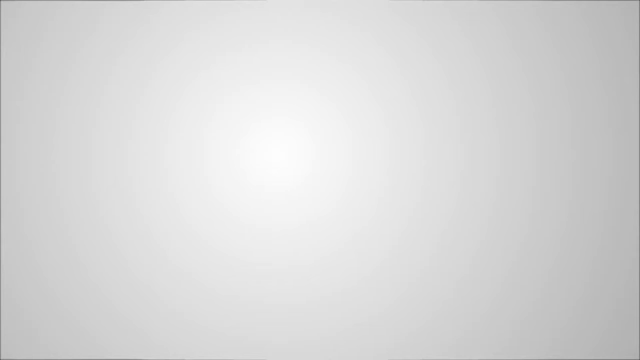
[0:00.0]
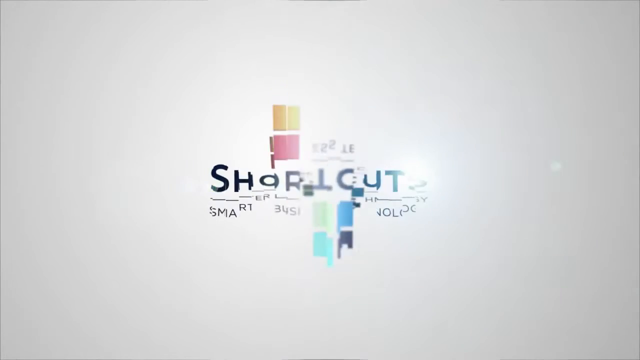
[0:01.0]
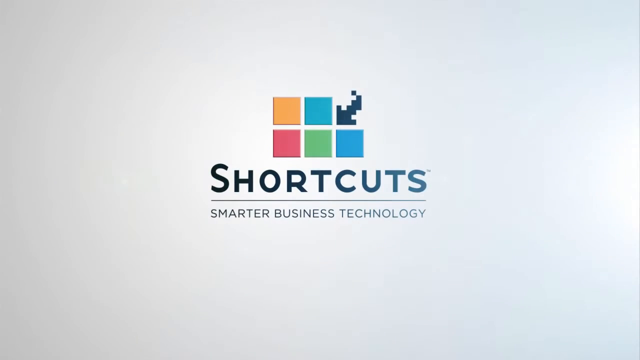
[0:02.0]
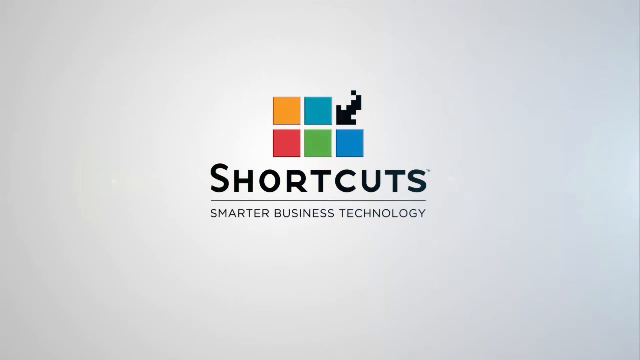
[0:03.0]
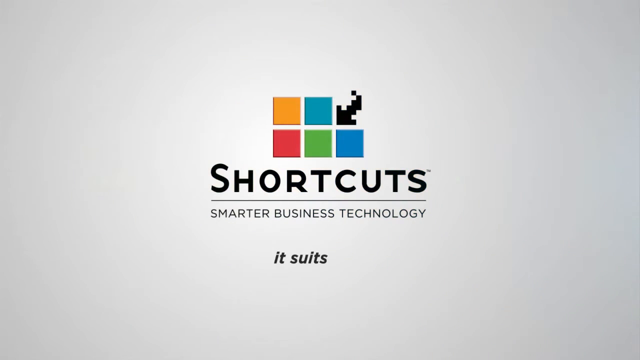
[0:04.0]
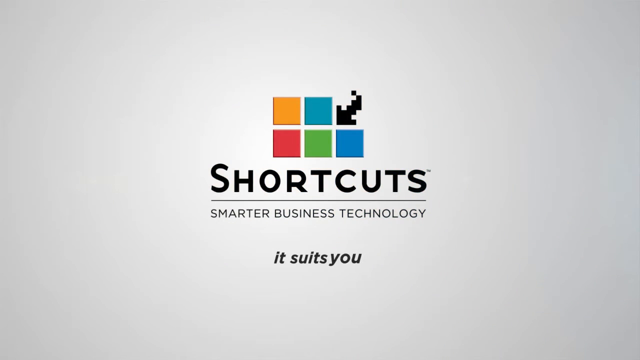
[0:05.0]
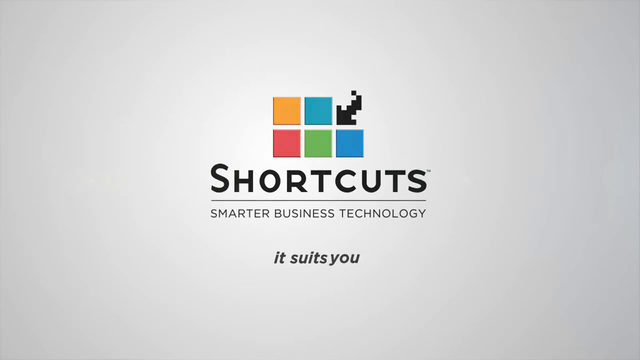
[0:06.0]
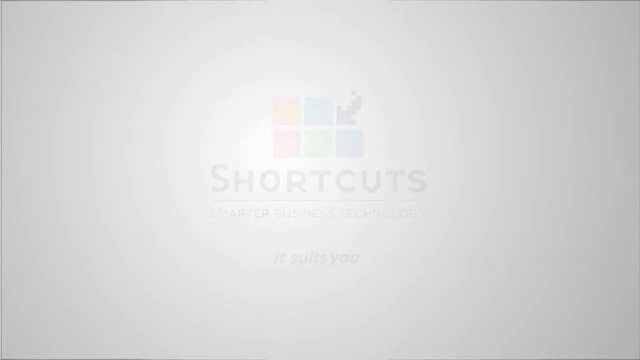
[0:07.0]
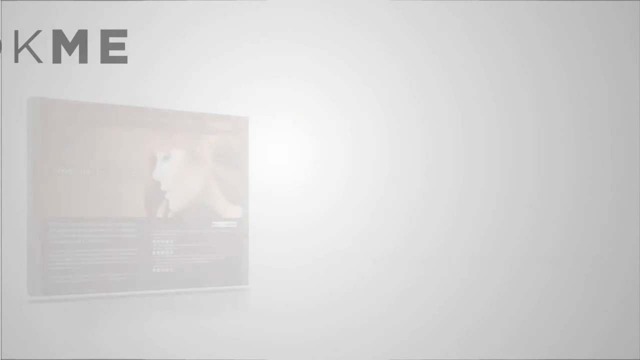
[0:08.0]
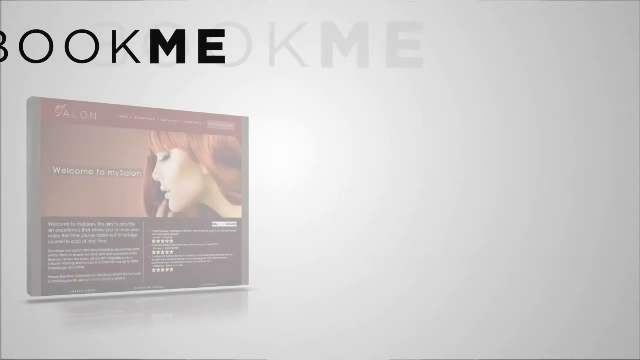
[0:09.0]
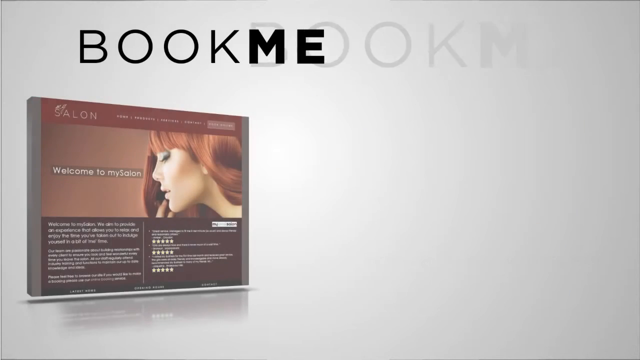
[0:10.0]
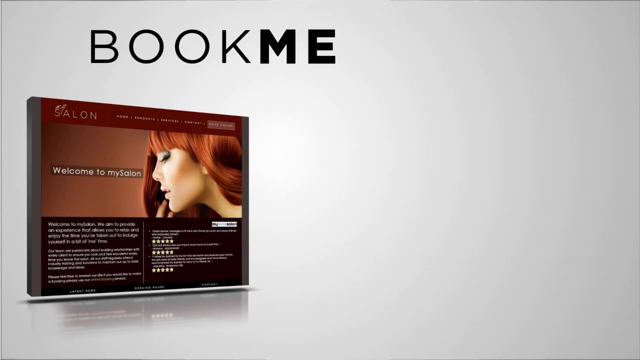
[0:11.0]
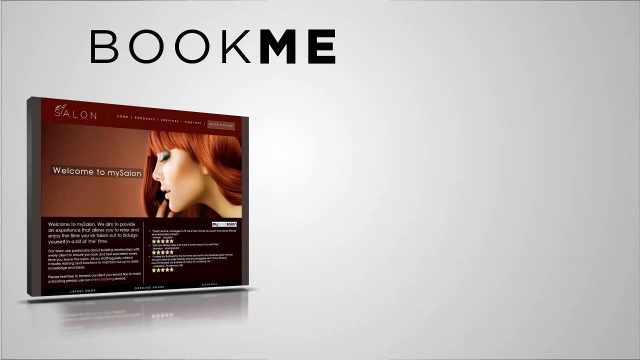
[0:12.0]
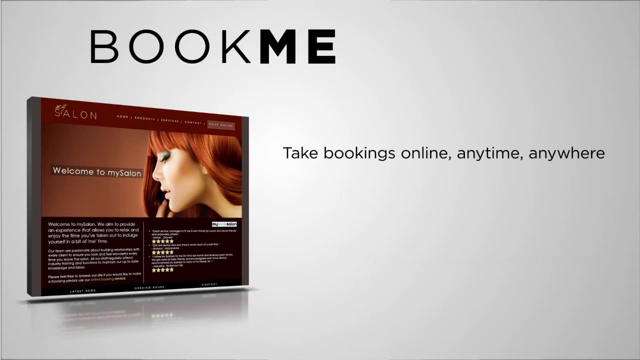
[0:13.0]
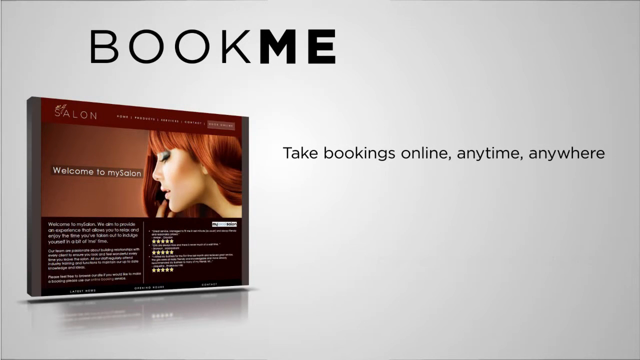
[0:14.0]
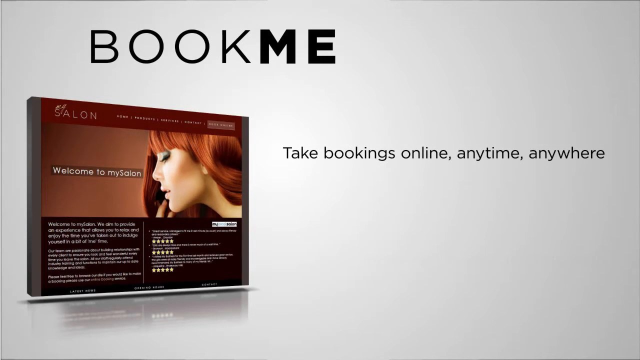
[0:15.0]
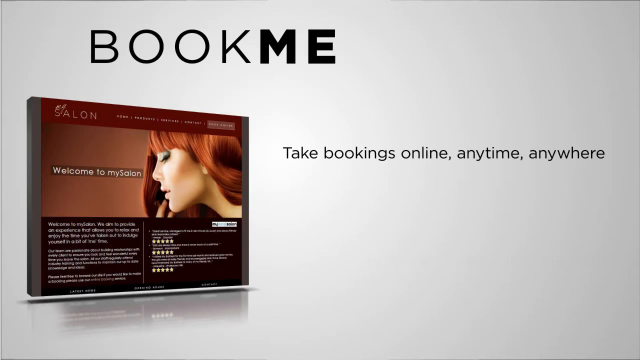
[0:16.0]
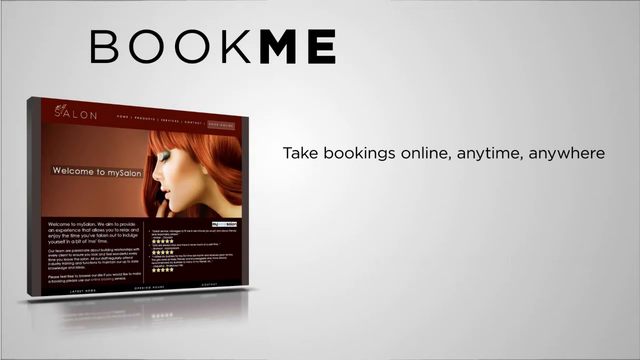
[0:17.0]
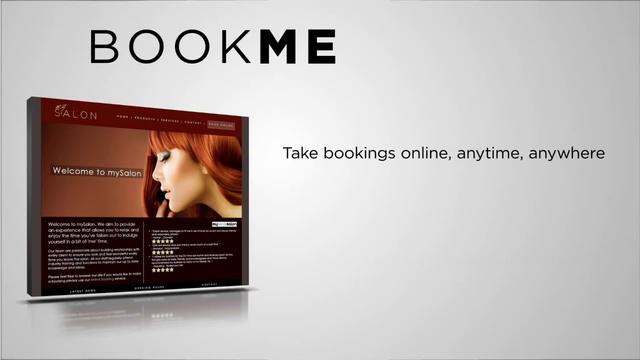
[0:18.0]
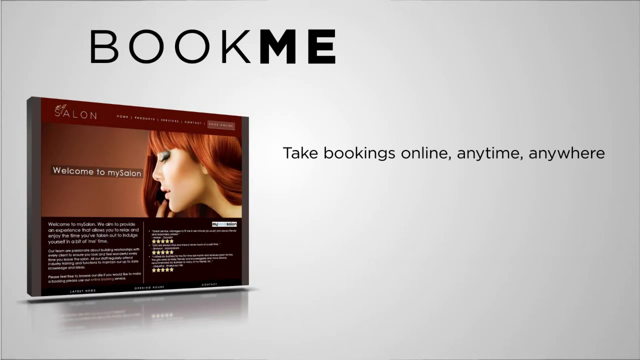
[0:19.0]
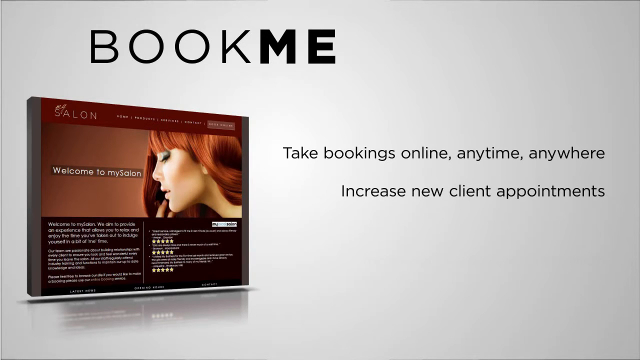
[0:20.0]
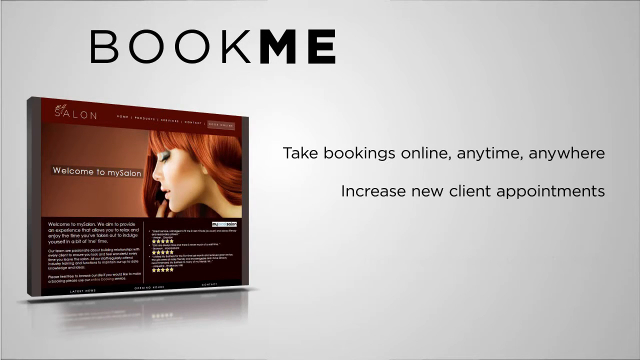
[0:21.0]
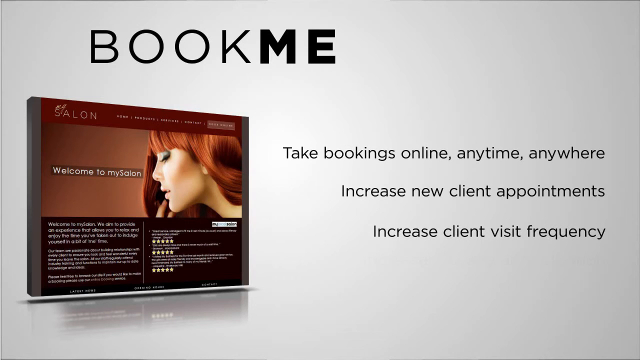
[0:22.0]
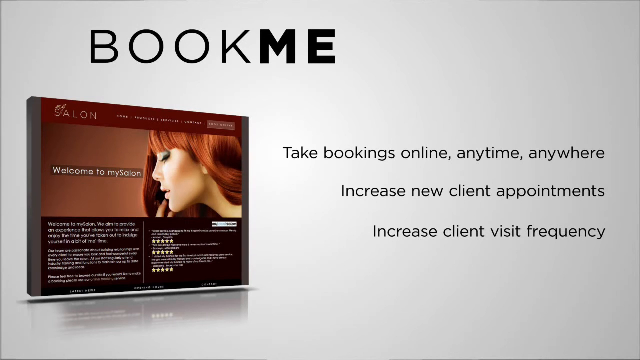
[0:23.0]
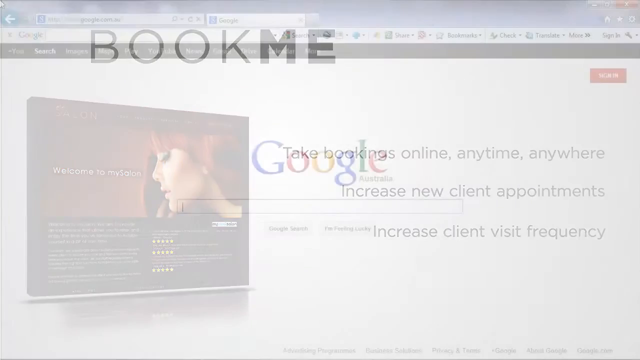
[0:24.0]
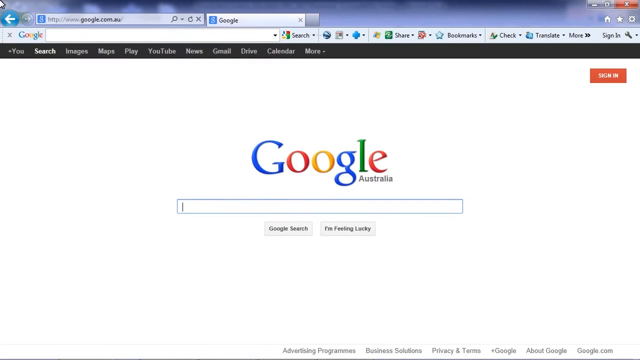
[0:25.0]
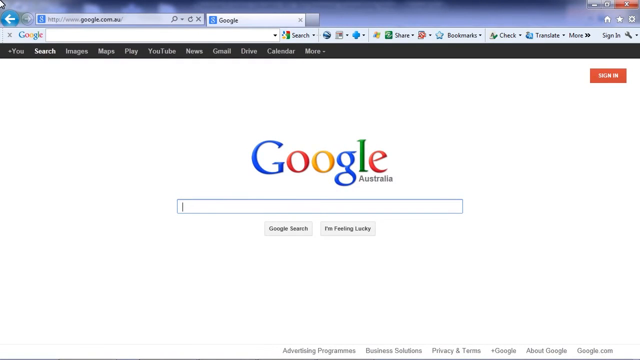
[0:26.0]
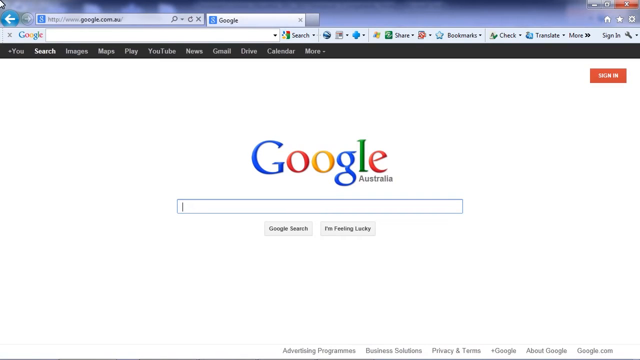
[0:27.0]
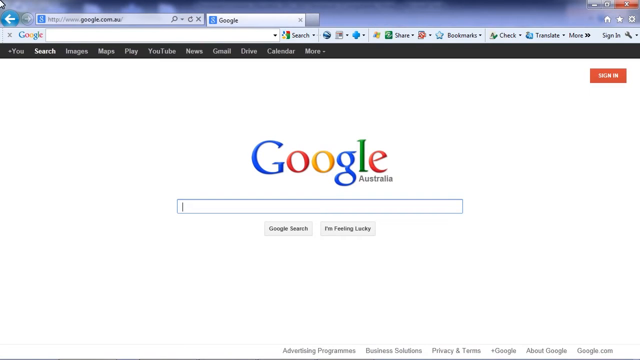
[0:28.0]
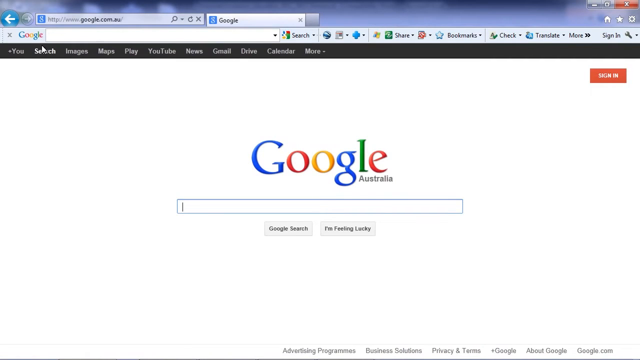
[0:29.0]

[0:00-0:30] The video shows online booking. There is what looks like a book, with a background and a logo. On the book is a woman with shiny brown hair and makeup, shown only from the side. Text in the background appears to be the name of the author or writer of the book; it is written small, so not much of it can be seen.